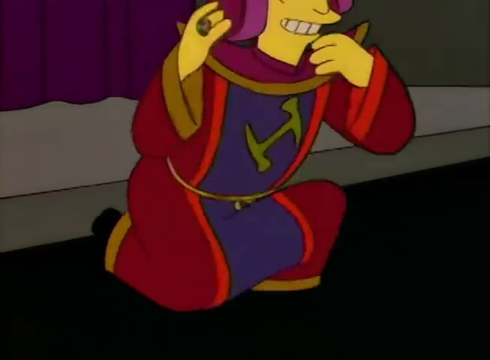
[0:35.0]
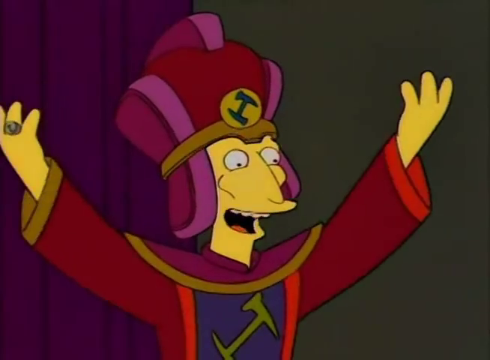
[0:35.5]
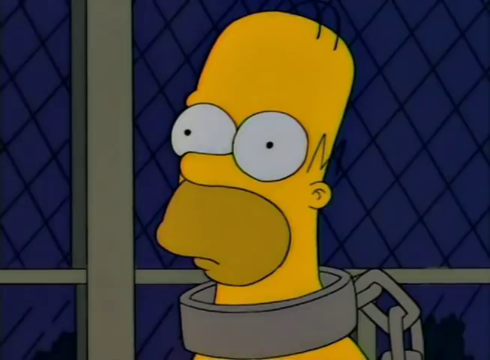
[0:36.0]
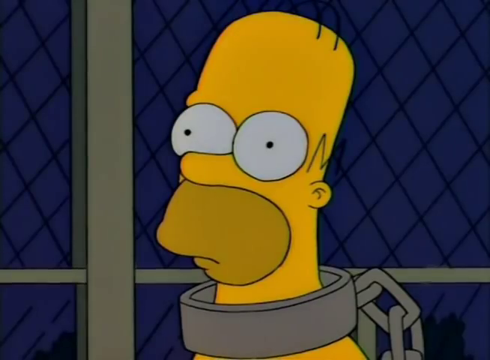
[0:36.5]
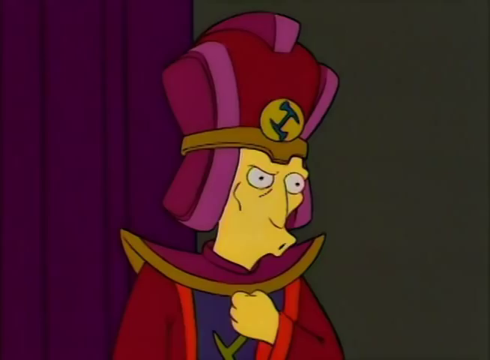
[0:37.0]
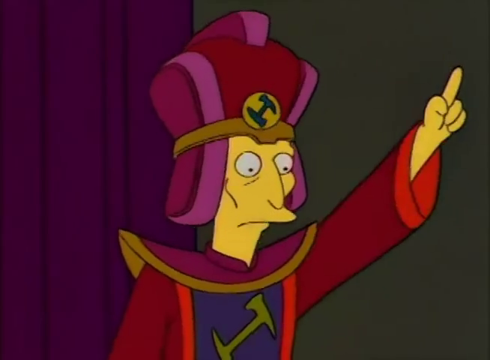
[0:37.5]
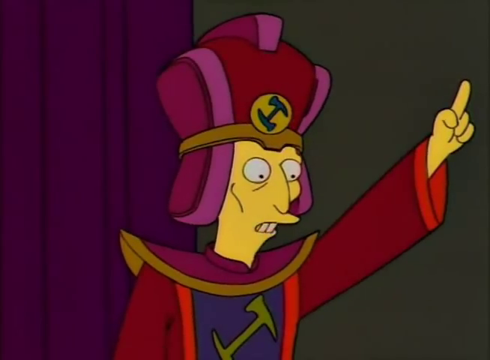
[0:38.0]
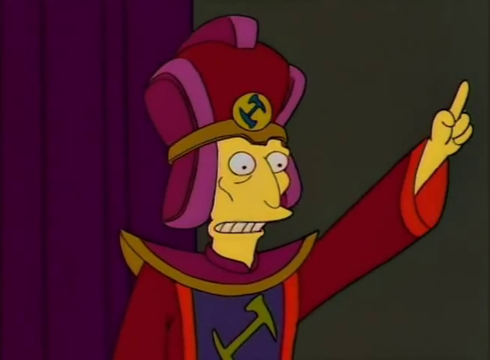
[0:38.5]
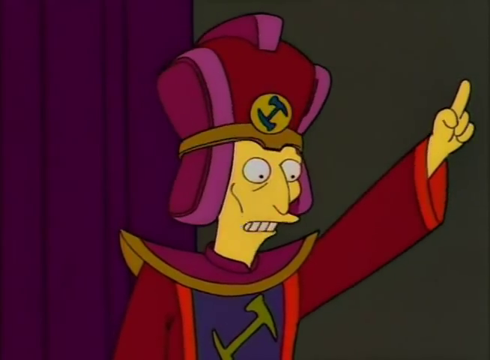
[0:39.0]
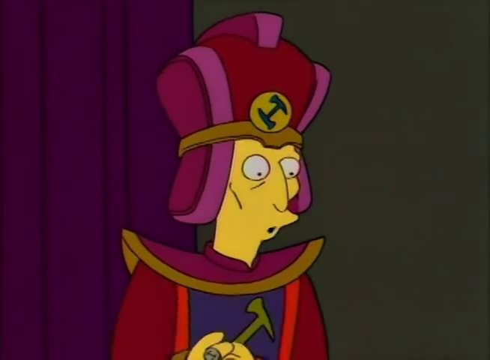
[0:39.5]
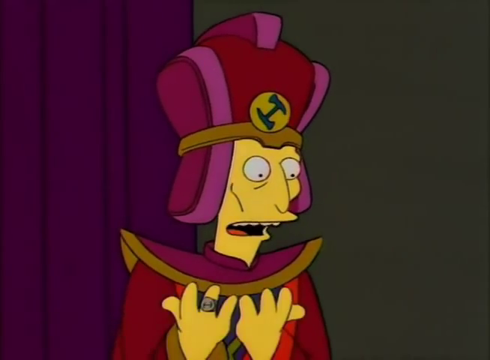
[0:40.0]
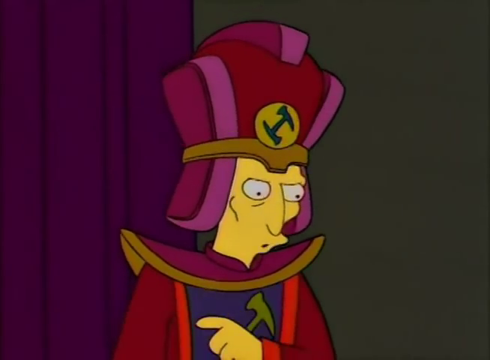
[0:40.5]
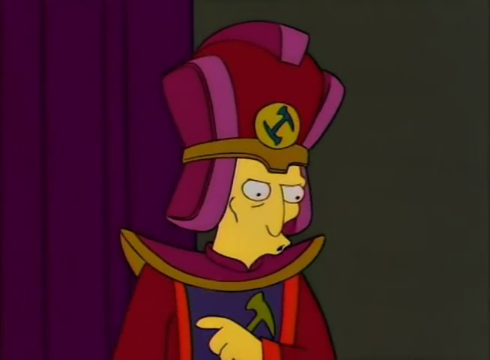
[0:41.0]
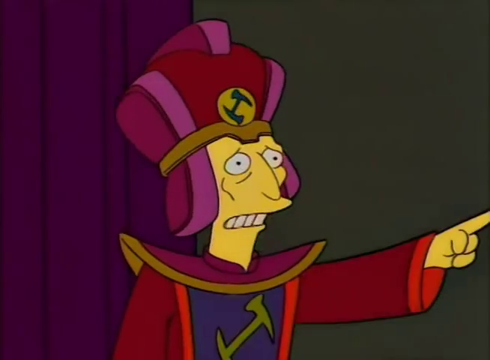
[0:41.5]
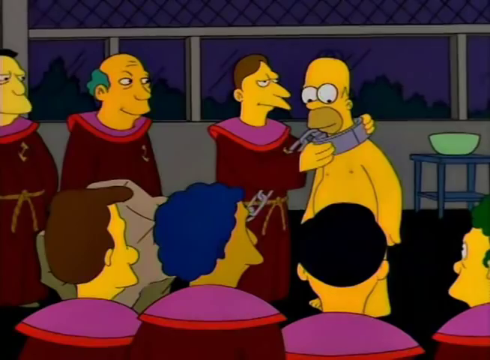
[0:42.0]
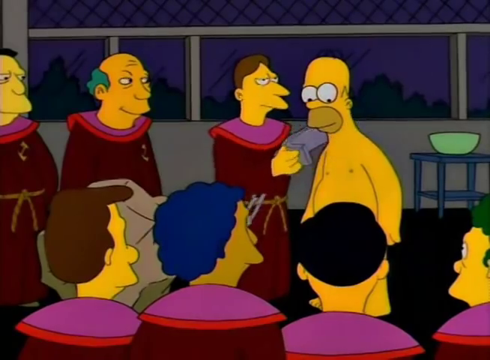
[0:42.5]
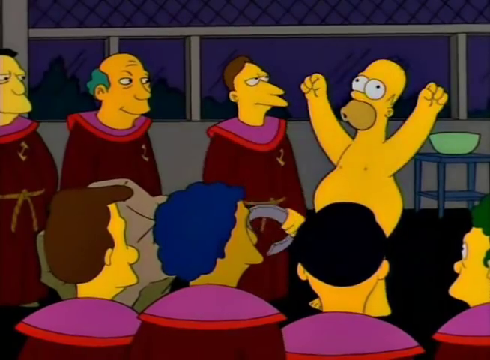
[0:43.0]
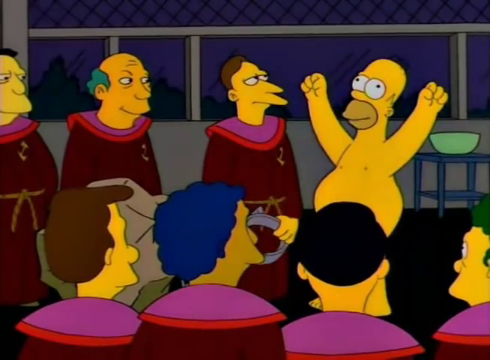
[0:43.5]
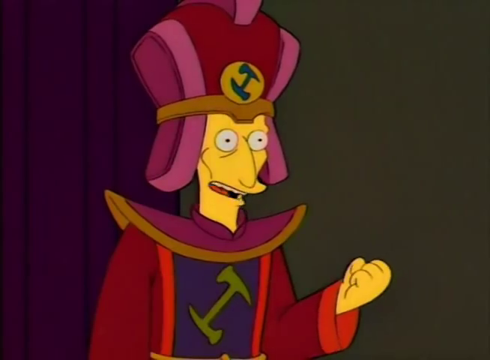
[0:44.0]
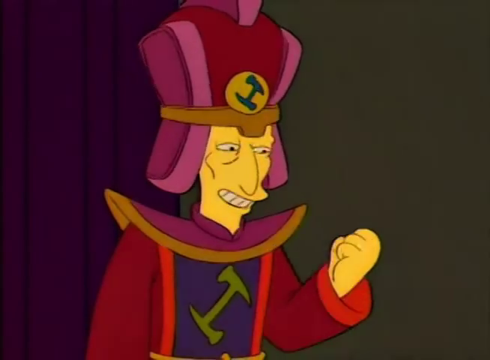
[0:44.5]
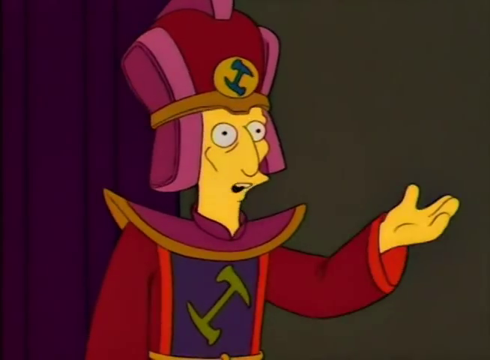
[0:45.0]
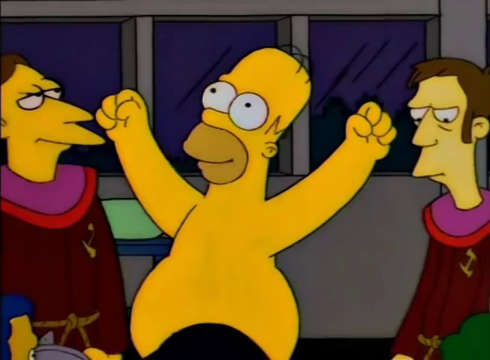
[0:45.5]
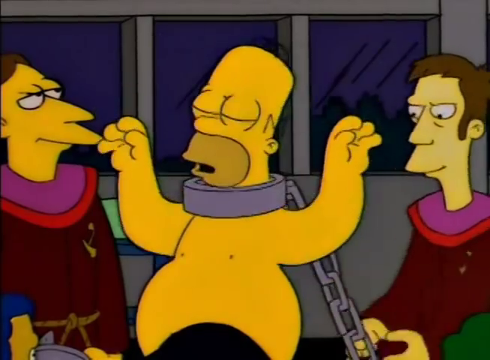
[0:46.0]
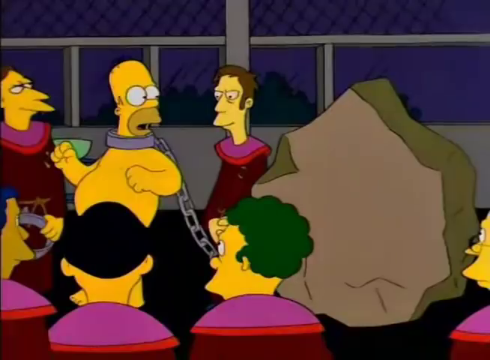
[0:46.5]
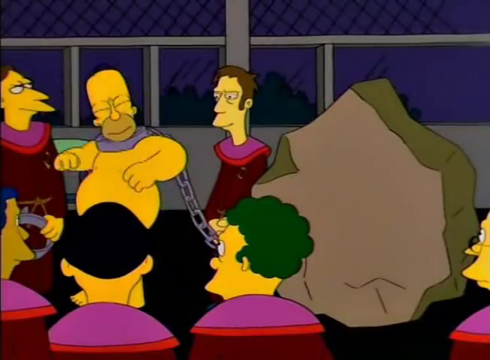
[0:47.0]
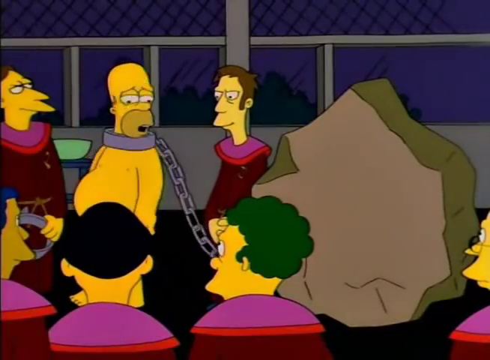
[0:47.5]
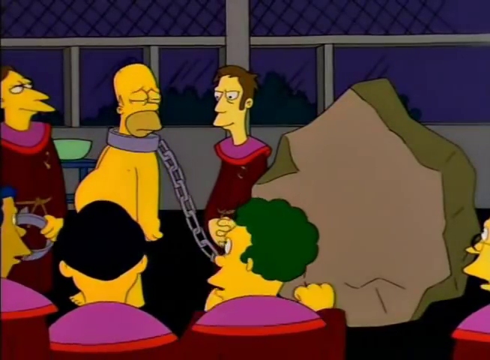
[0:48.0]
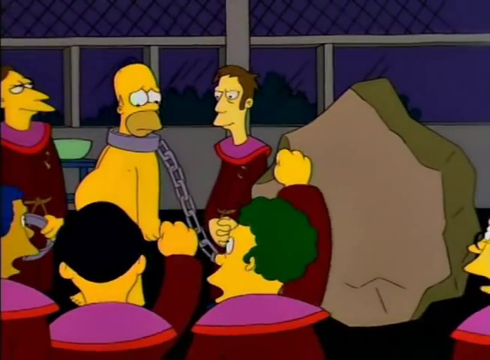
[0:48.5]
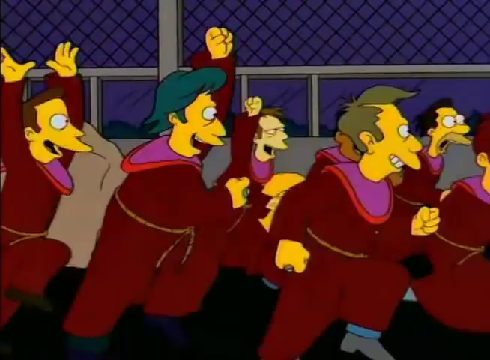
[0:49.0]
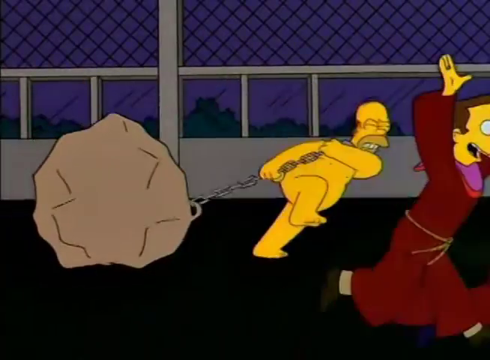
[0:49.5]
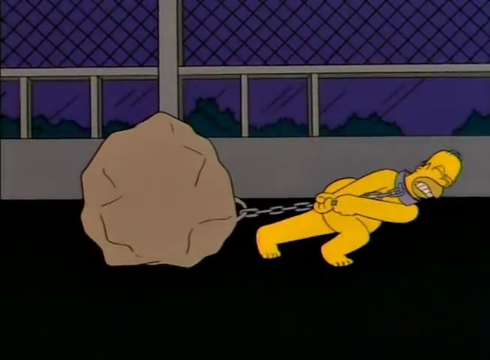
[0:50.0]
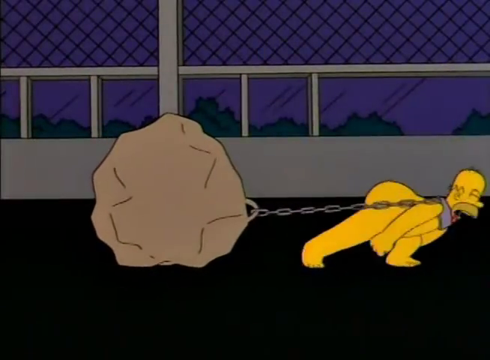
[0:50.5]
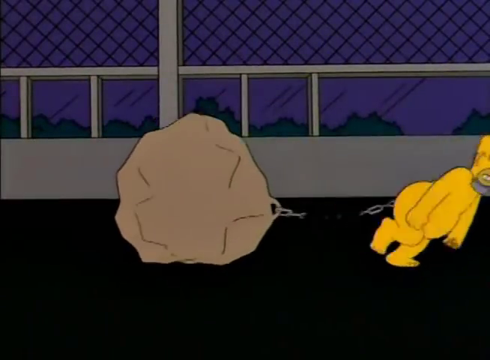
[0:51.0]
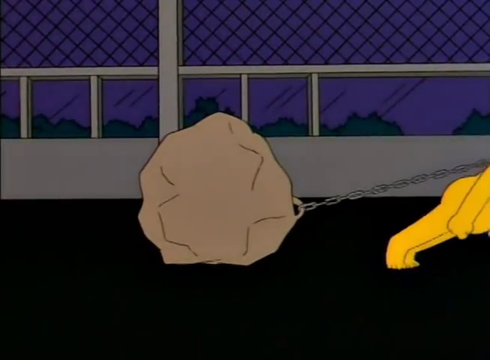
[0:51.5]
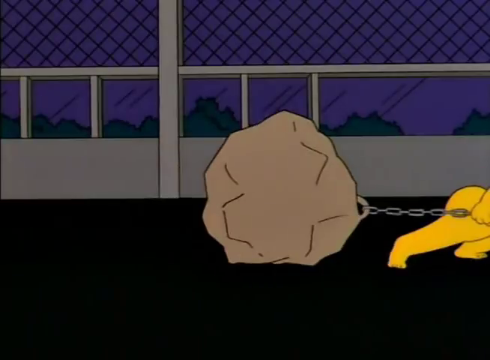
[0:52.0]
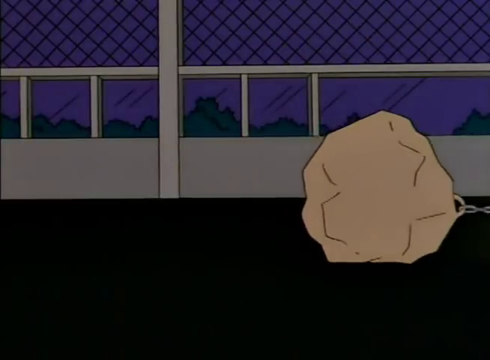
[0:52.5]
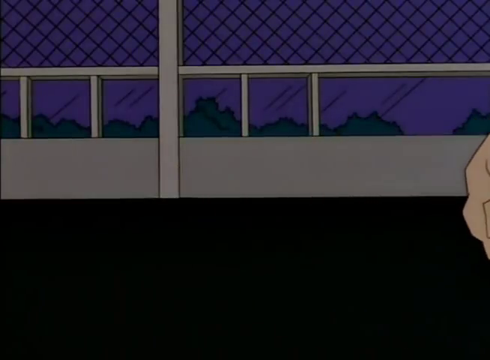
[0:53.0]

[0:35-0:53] One of the men bowing on the ground to Homer, the one with a hat on his head, stands up and speaks to Homer with hand gestures and expressions, pointing up at the sky as he talks. One of the men dressed in the robes then removes the collar from around Homer's neck. Homer looks up at the sky with his arms stretched upward and lets out an exclamation. The man with the hat smiles, and a different man puts the collar back on Homer; the boulder is visible next to the men. All of the men gleefully run out of frame, leaving Homer to pull the very heavy boulder with the chain around his neck, and he struggles mightily to do so.